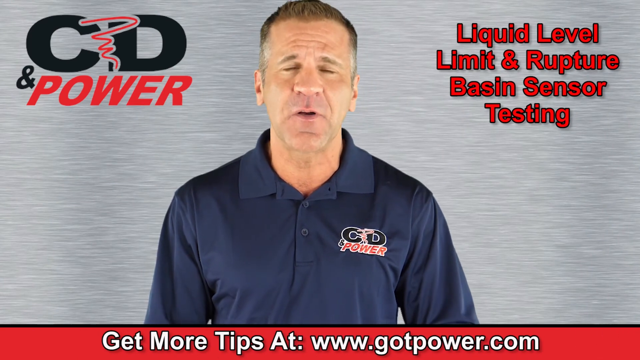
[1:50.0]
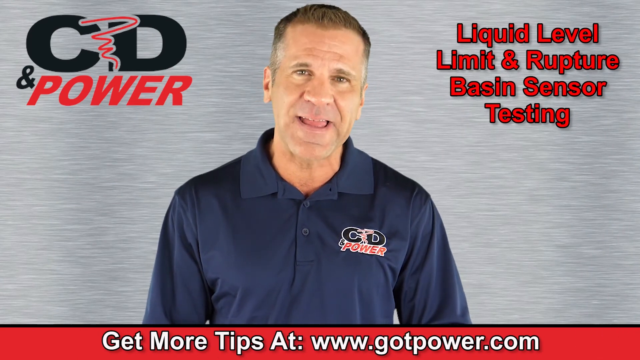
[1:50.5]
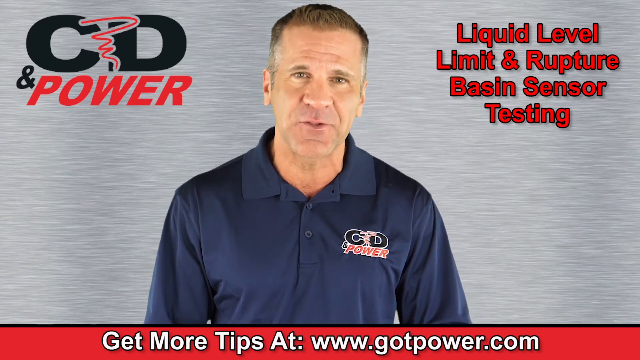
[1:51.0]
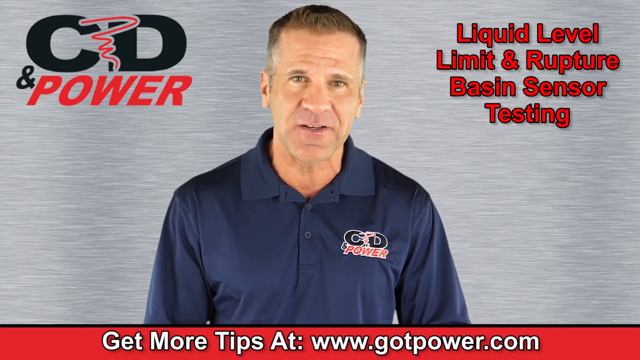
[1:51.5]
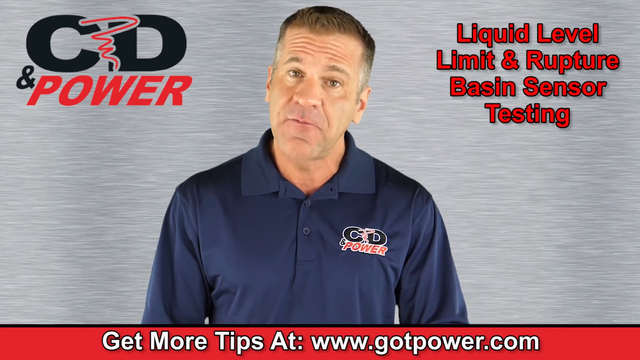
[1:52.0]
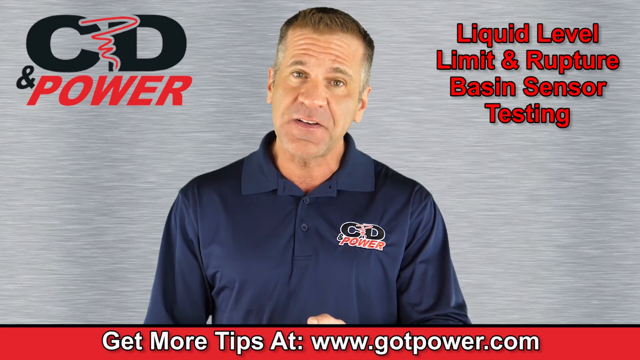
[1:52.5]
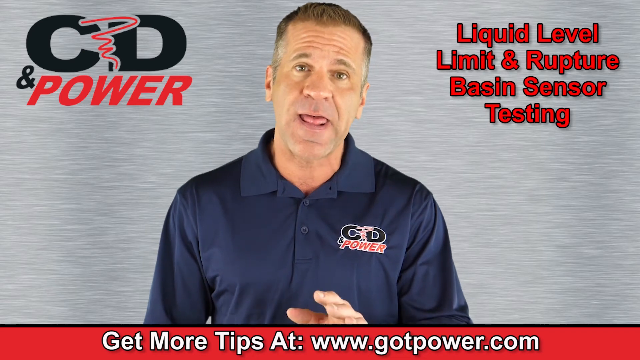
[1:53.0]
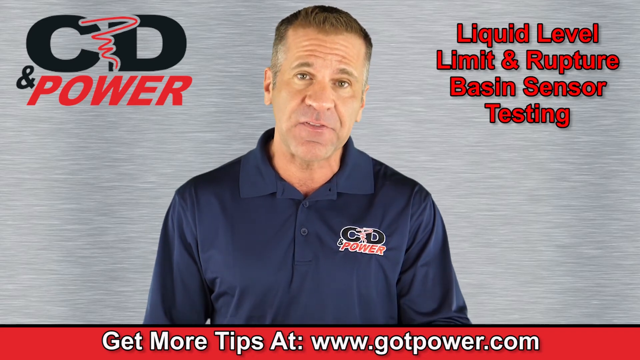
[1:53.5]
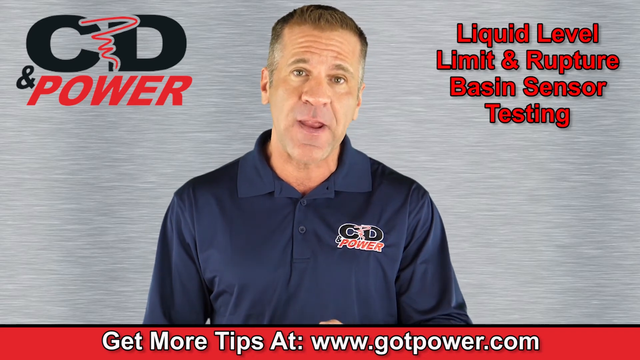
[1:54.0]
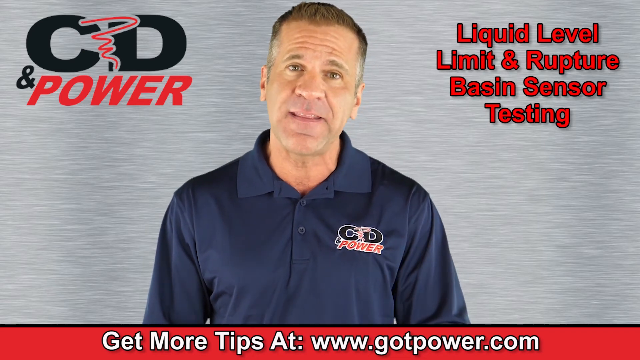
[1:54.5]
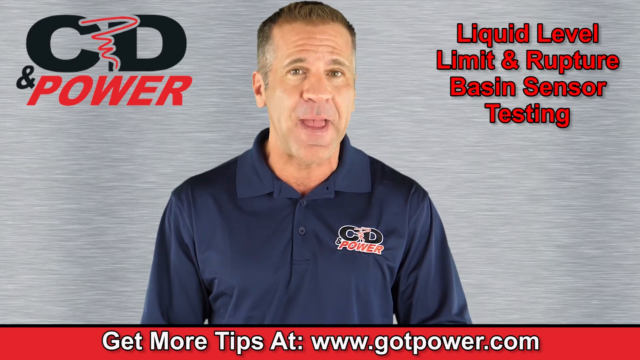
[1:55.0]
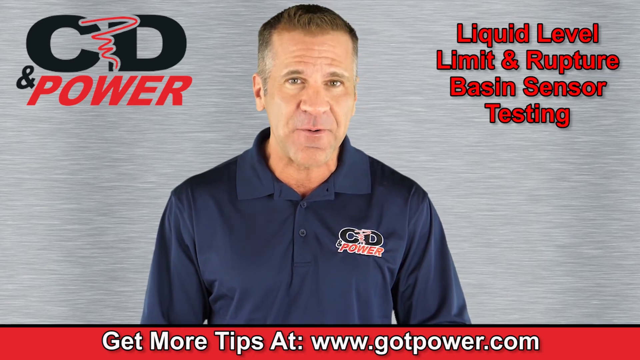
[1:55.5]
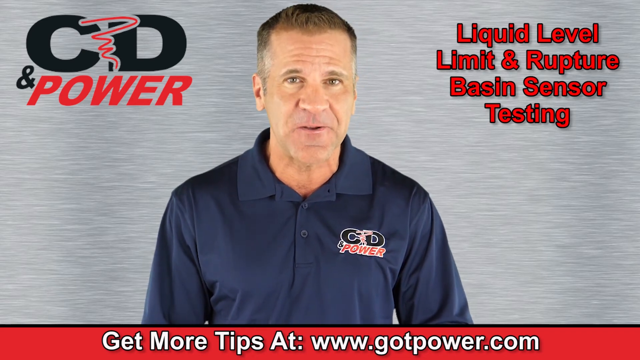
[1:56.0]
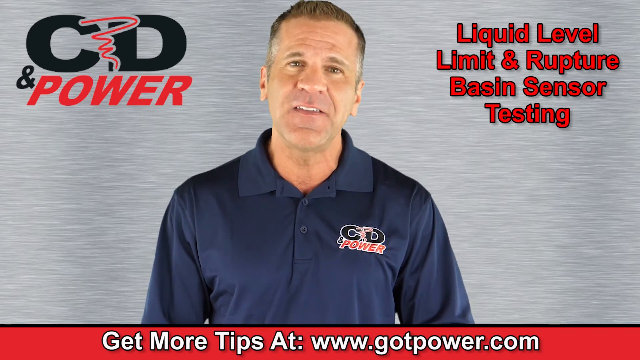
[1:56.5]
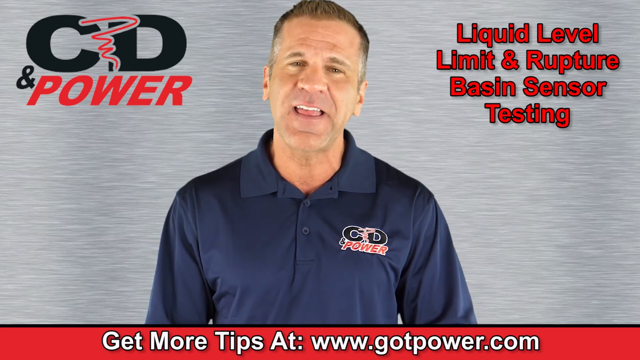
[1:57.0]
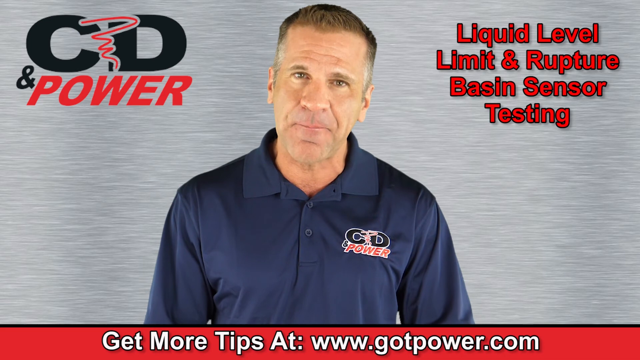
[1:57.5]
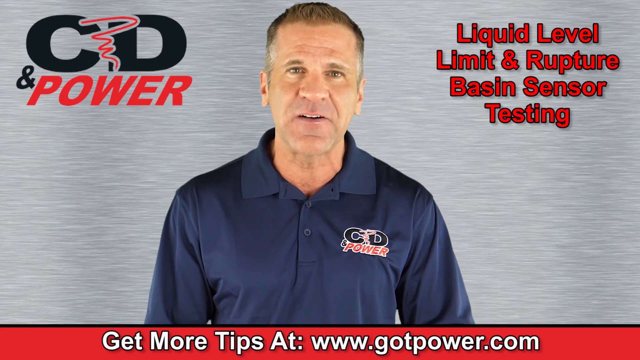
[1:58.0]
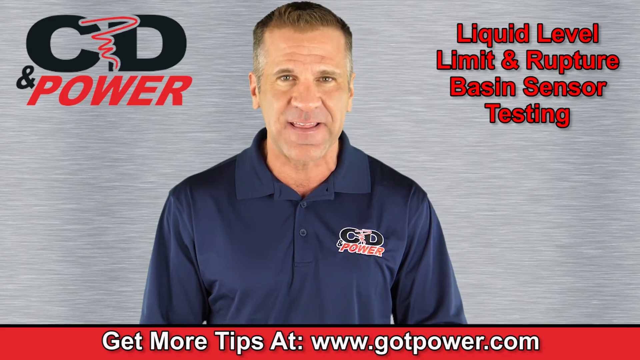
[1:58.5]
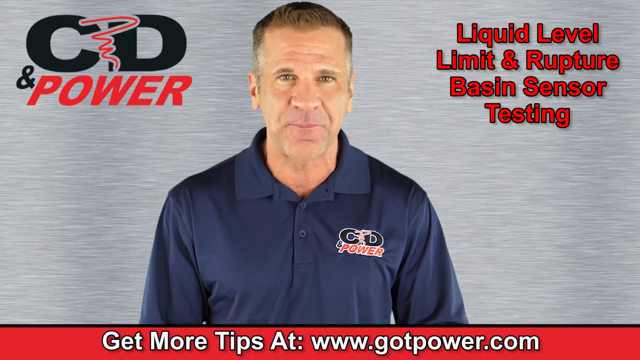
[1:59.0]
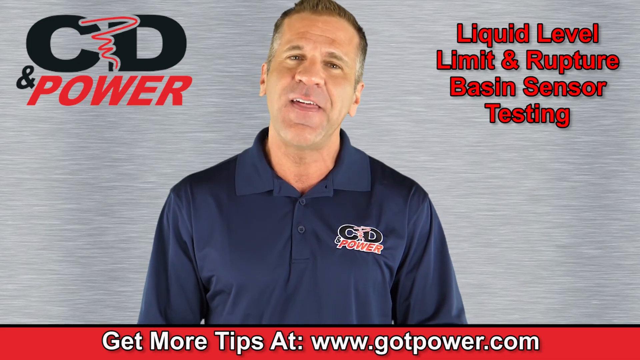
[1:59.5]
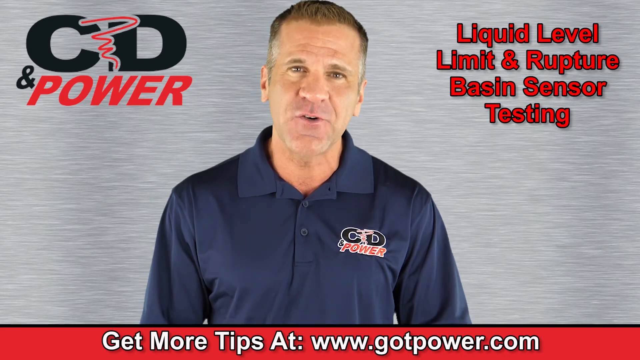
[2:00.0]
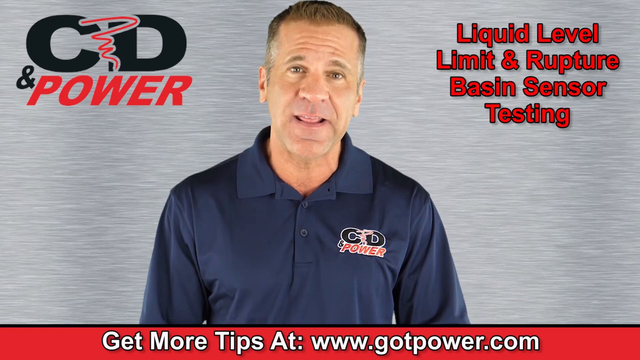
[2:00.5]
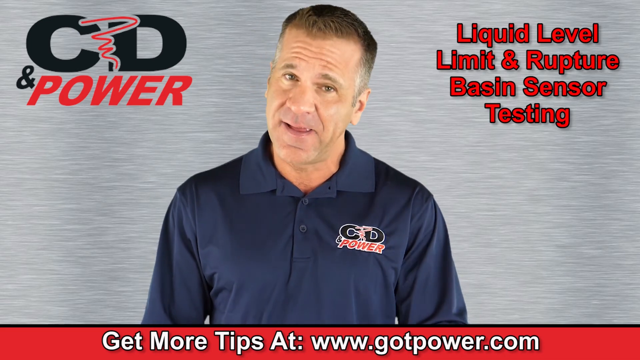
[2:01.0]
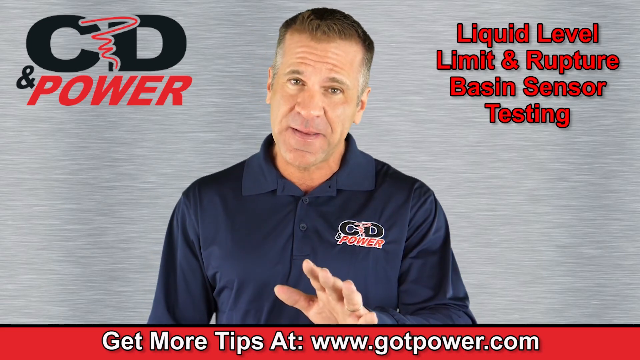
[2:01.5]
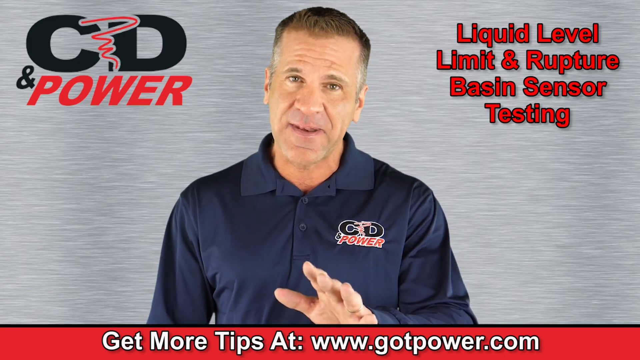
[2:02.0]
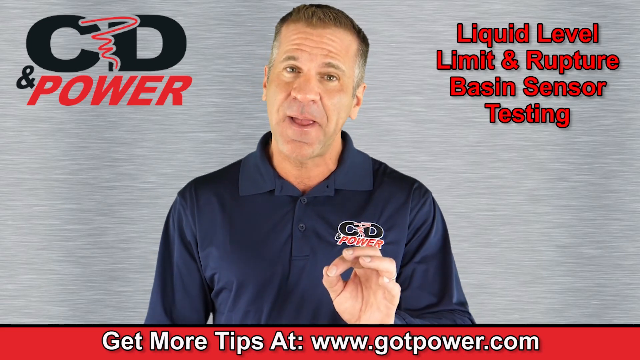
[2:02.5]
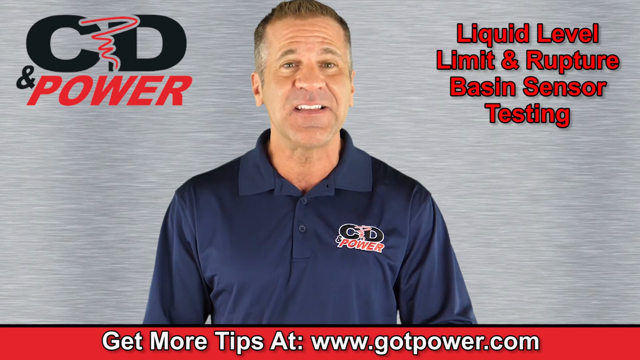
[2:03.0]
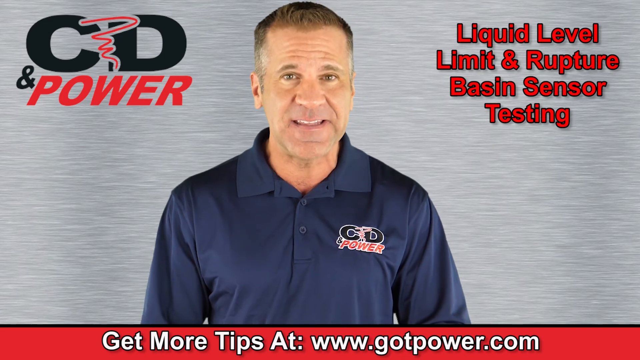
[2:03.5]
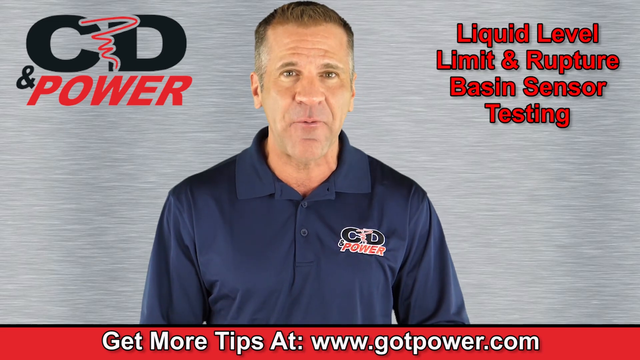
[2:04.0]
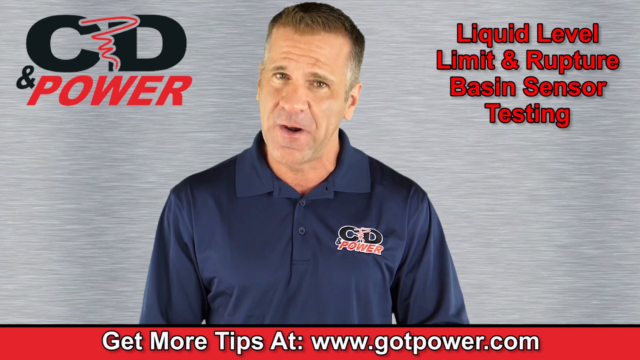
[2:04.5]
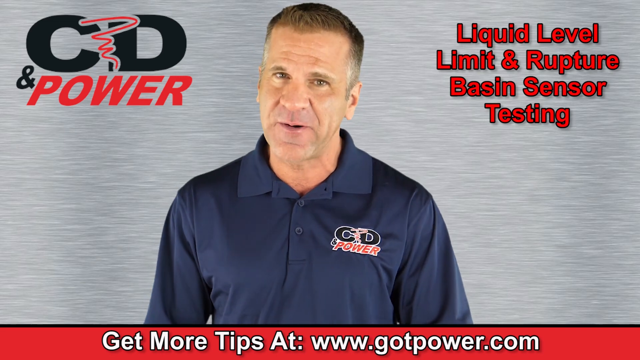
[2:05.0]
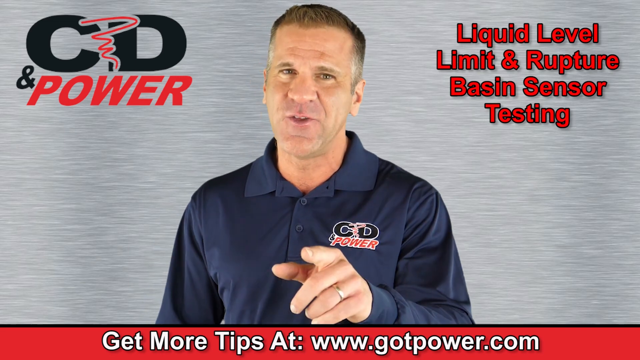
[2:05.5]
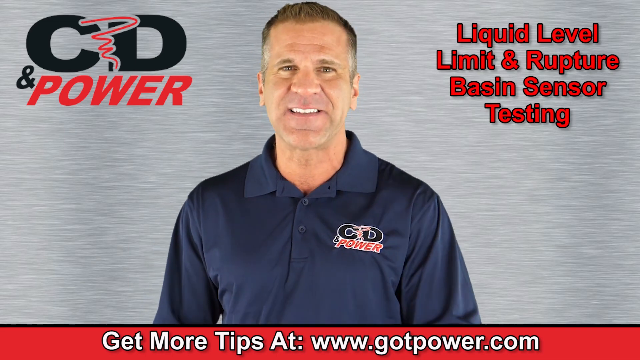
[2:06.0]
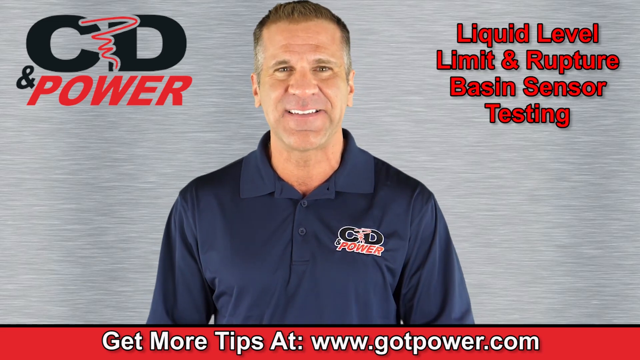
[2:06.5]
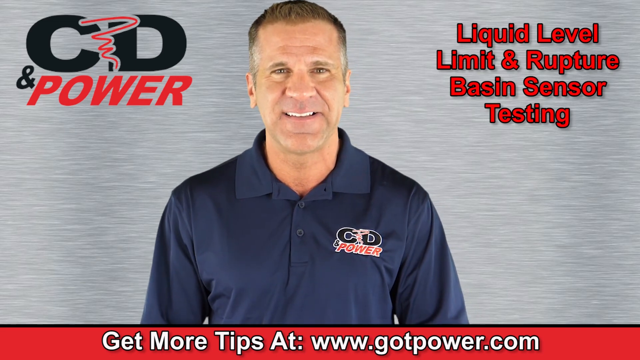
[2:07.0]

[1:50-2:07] The man keeps talking. A red bar at the bottom of the screen carries big white text: "get more tips at www.gotpower.com". He seems to be signing off, looking at the screen with a very happy expression and keeping eye contact with the viewer.